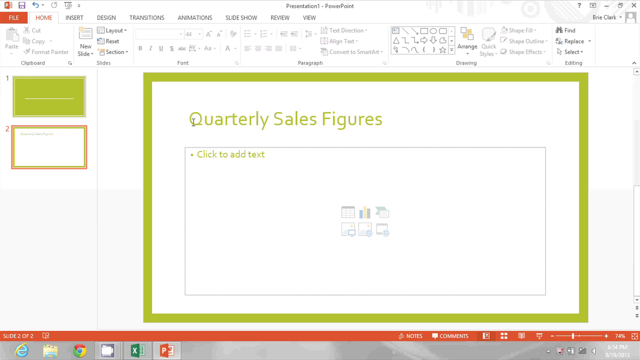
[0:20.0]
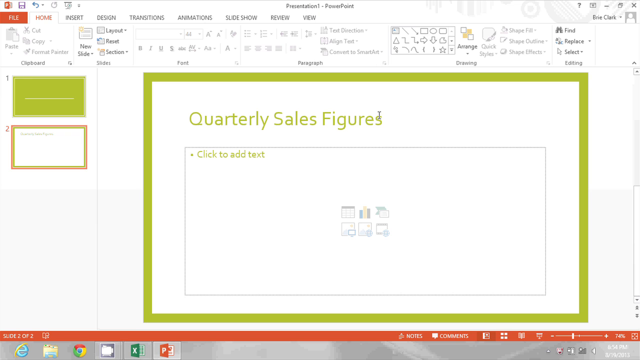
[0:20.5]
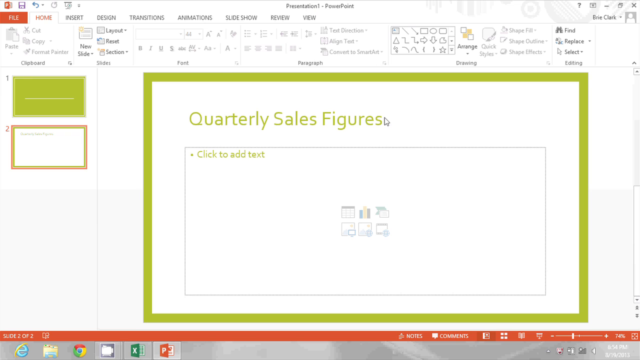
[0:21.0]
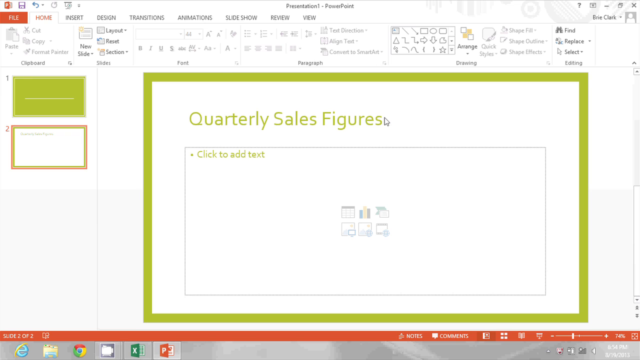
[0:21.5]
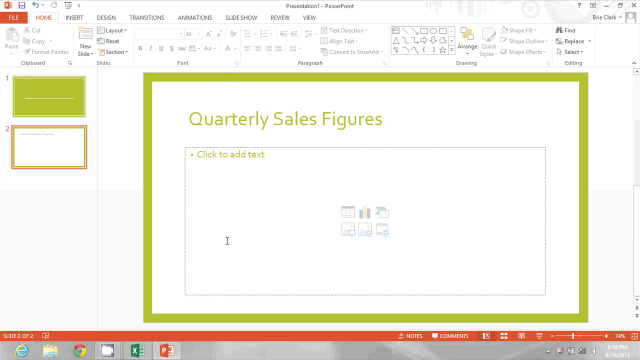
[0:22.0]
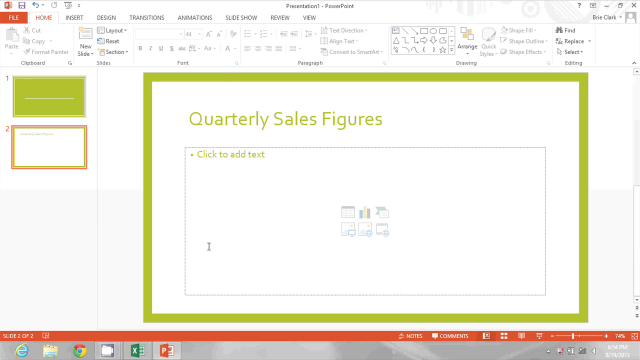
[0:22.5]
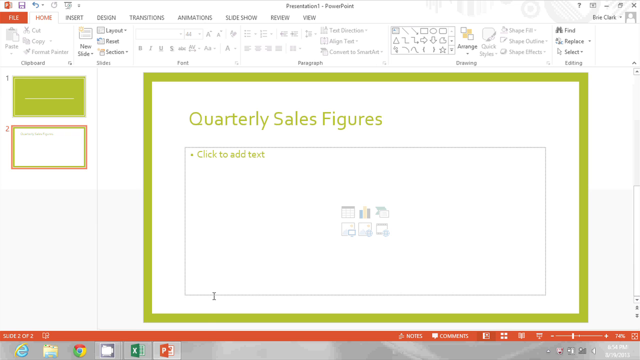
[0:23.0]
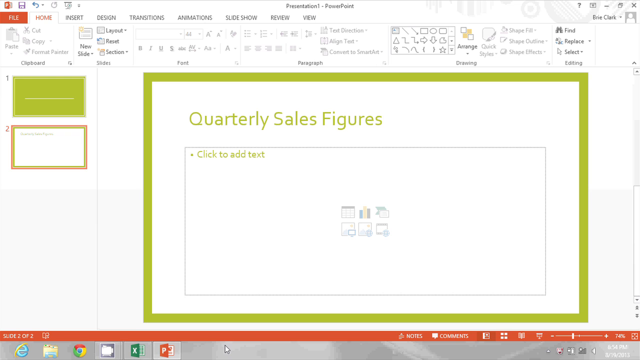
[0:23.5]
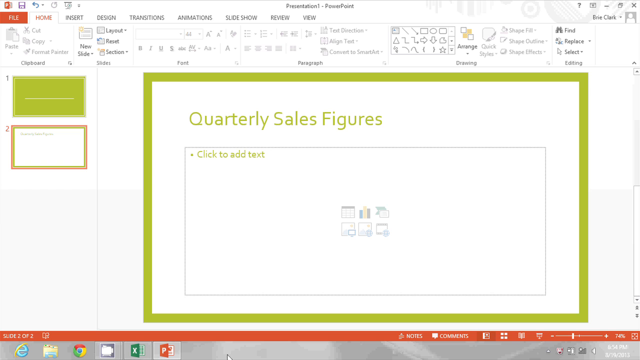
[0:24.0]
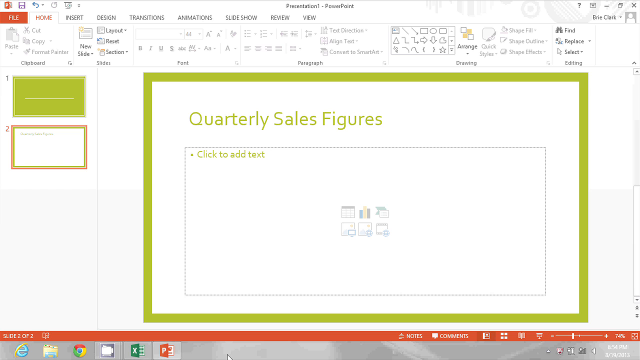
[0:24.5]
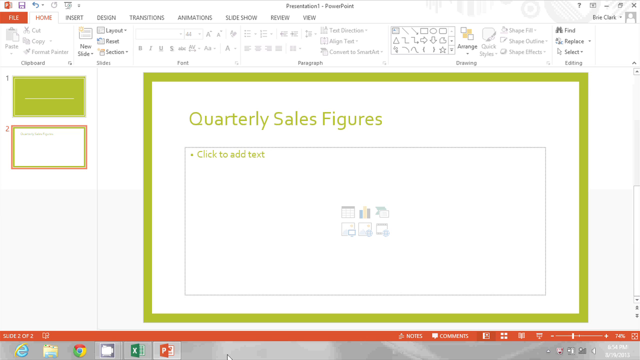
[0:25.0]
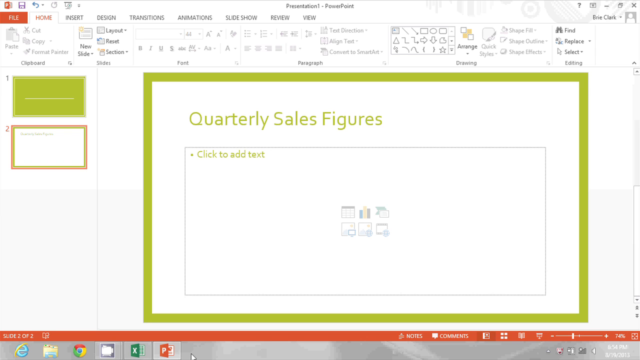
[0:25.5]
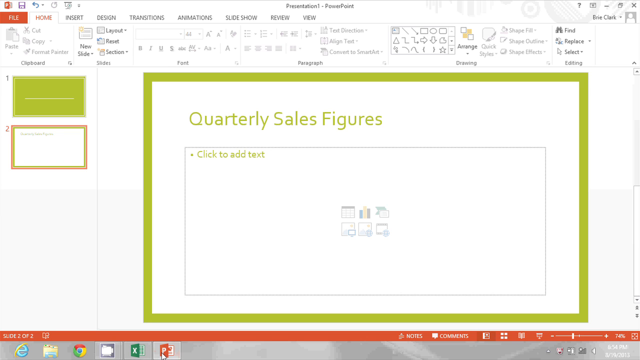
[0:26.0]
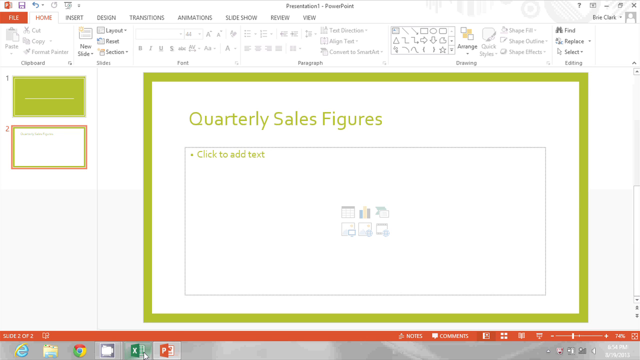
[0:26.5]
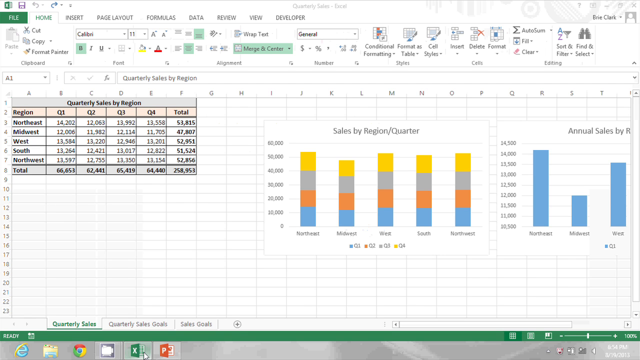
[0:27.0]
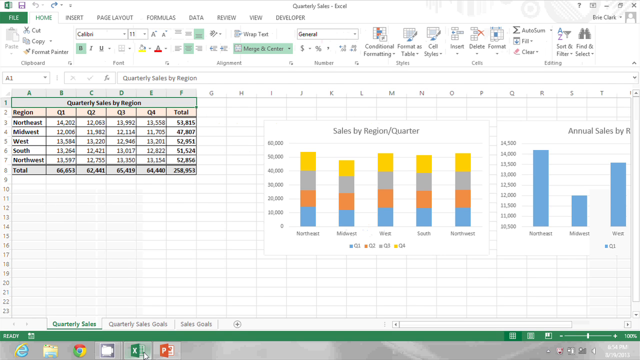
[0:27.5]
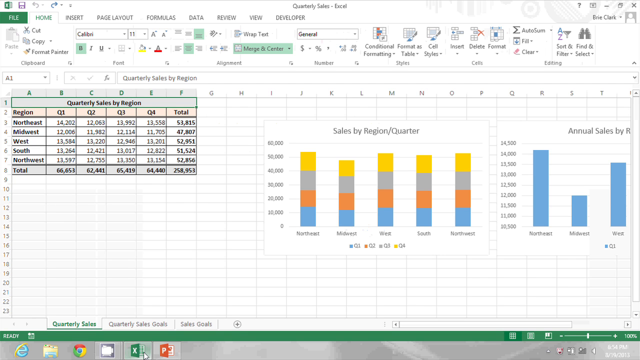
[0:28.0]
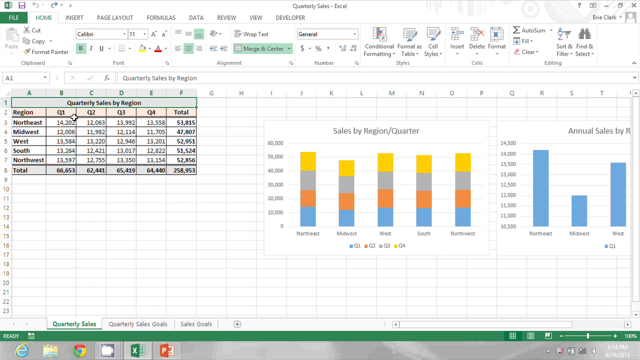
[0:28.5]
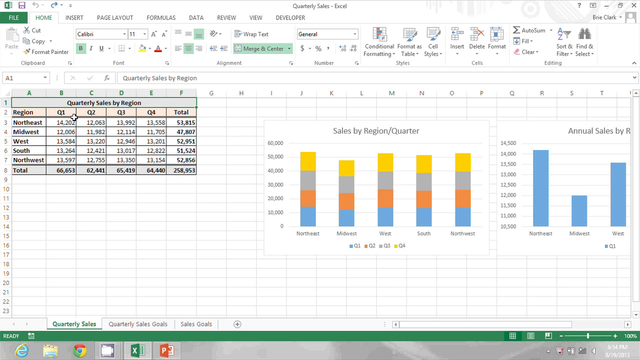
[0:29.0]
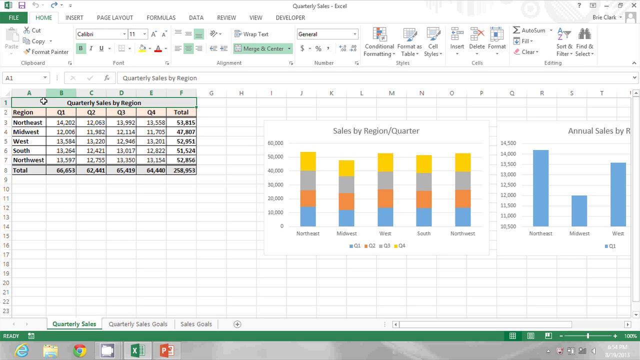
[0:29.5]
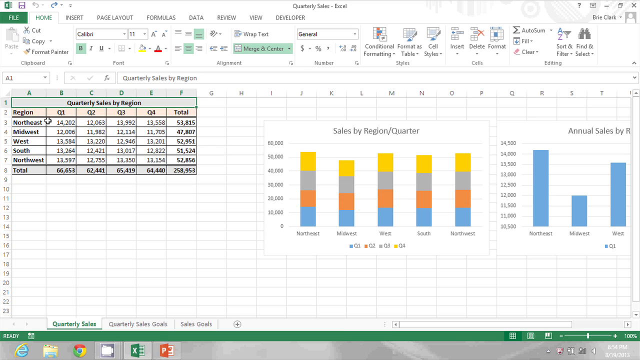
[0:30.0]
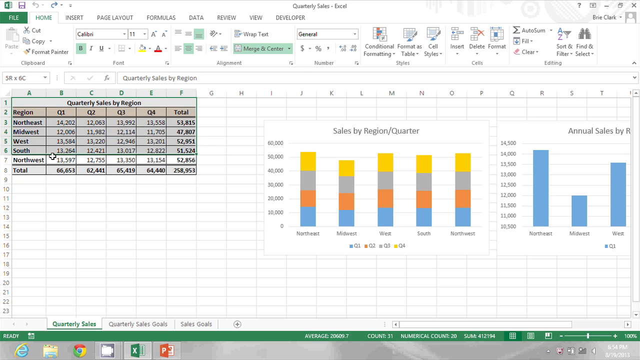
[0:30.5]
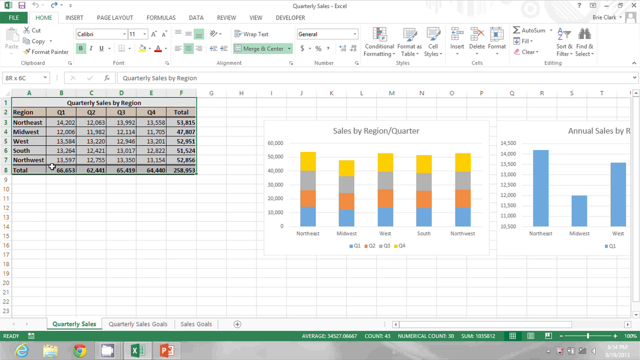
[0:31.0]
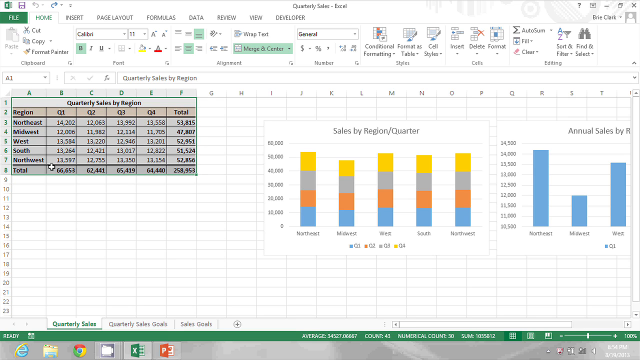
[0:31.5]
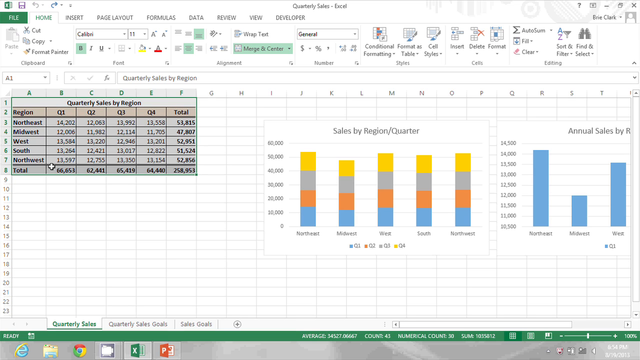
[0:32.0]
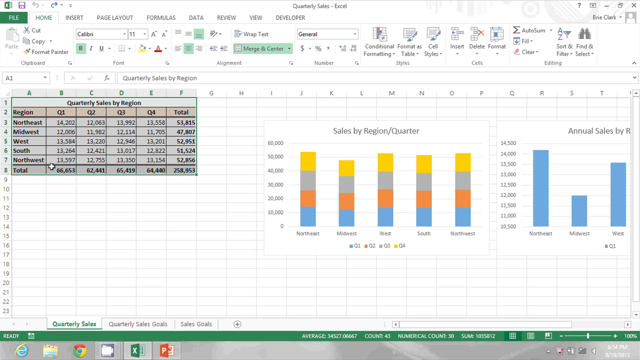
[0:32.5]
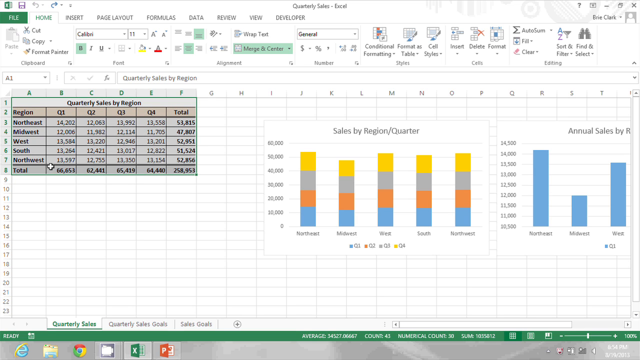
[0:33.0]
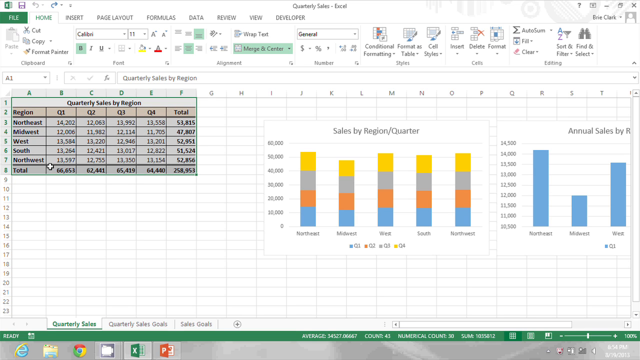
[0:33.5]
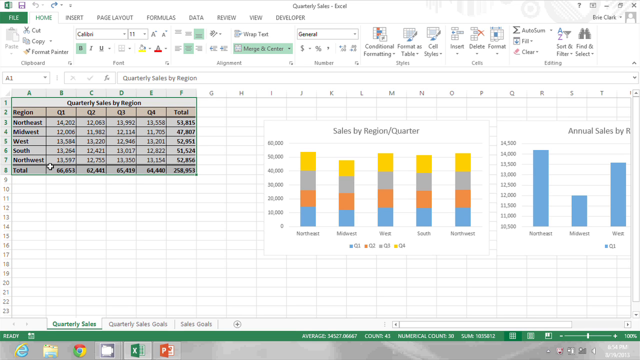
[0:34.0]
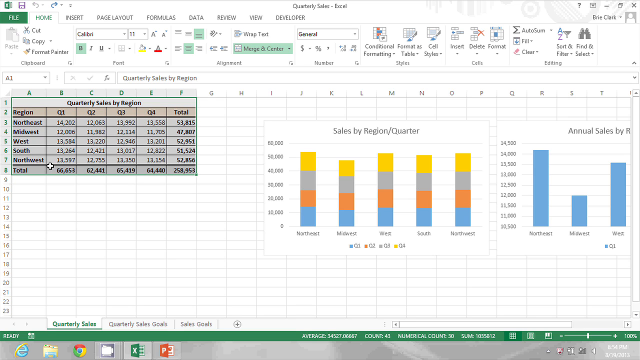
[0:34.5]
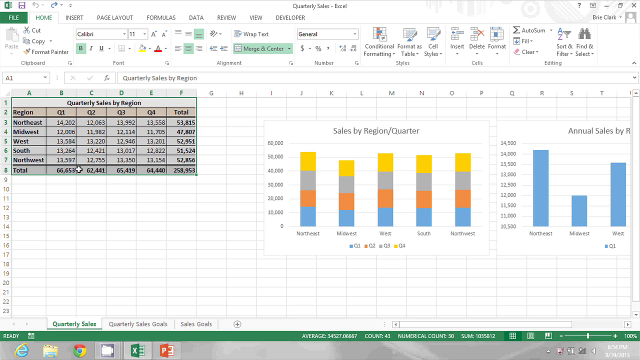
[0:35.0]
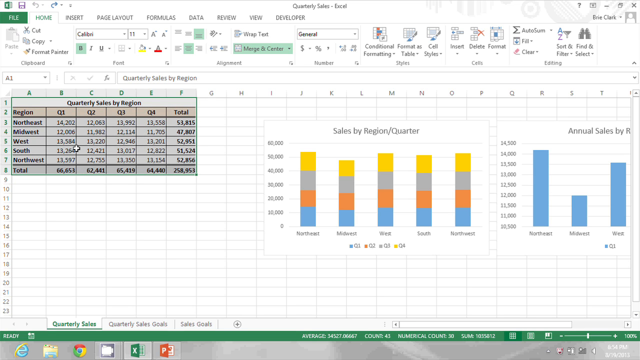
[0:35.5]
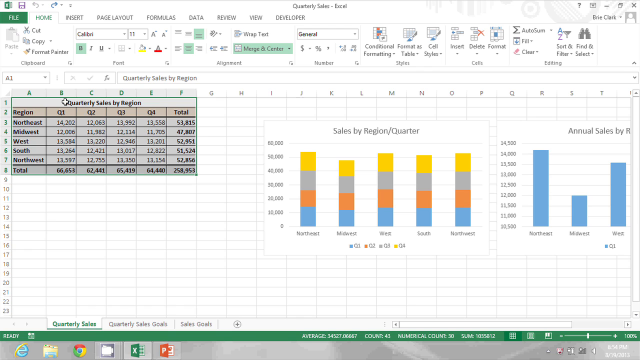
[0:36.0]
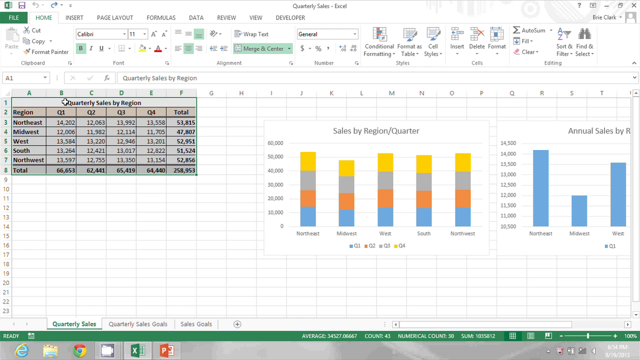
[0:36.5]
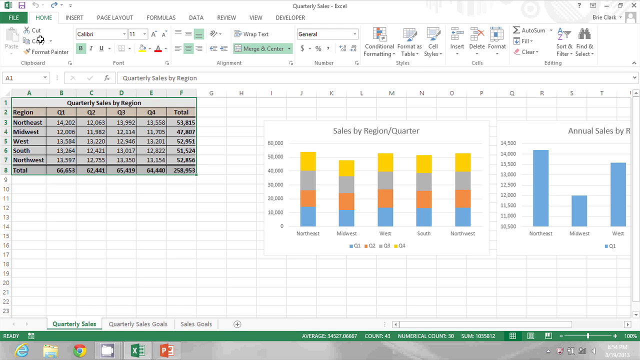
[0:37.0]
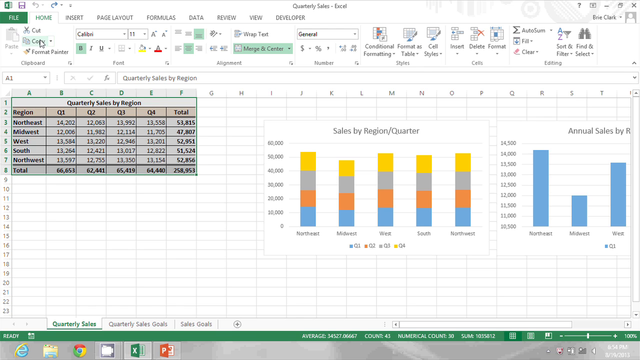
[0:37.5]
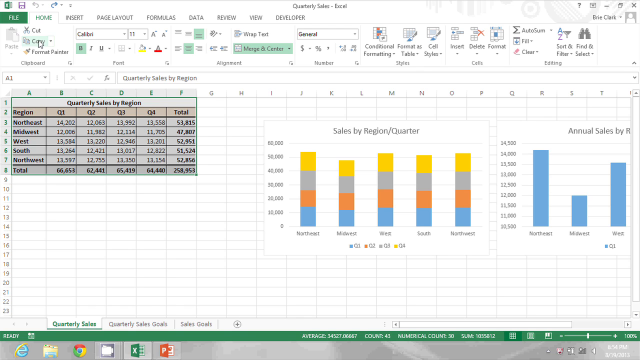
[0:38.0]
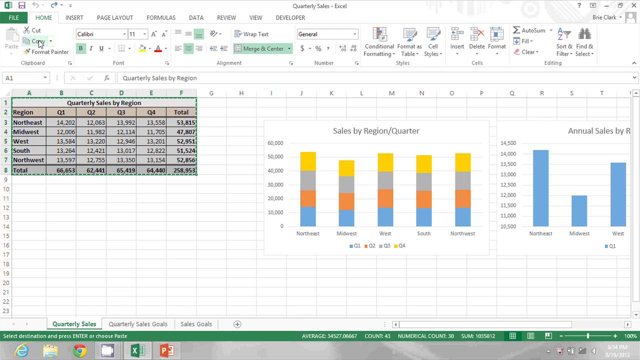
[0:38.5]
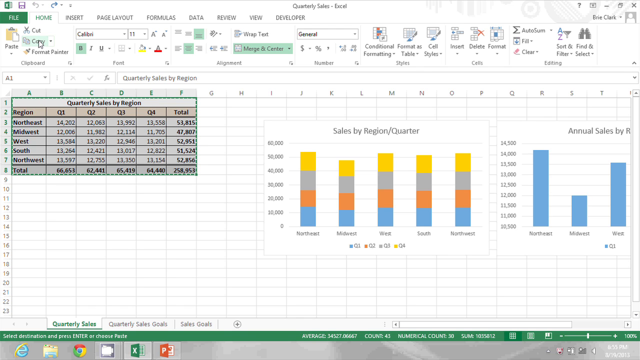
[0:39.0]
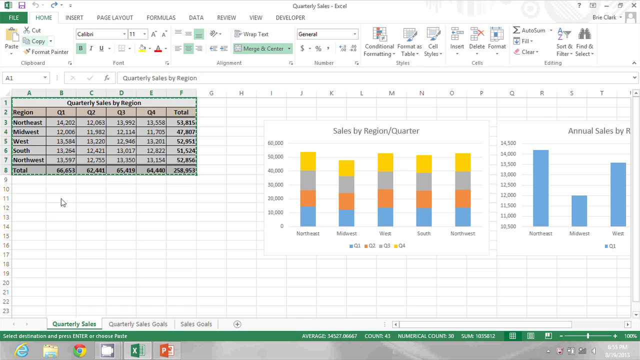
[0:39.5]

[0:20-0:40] The quarterly sales figures screen reads "click to add text," and someone moves a cursor around the page. The cursor clicks onto a spreadsheet with "quarterly sales by region" in the upper left corner. It lists locations with figures for the first, second, third and fourth quarters, and a total at the very end of each column. On the right side are bar graphs labeled "sales by region and quarter," in blue, orange, gray, and yellow on the top. Another bar graph, labeled "annual sales," has solid blue bars and is cut off on the right side of the computer screen. Across the top of the screen is additional information about the company.